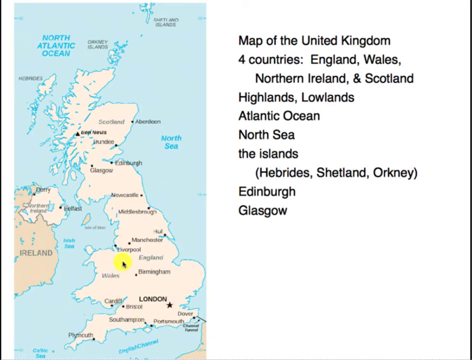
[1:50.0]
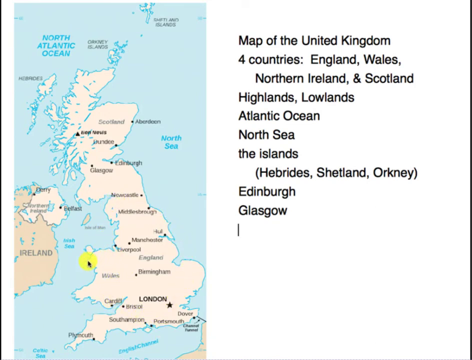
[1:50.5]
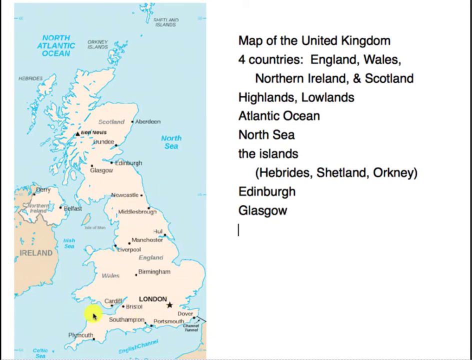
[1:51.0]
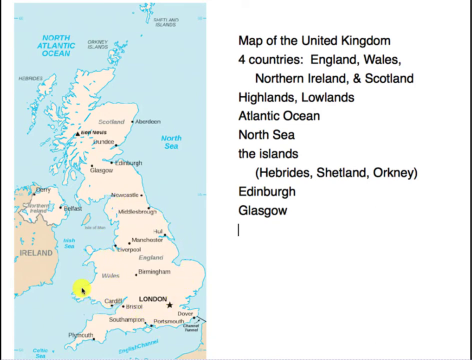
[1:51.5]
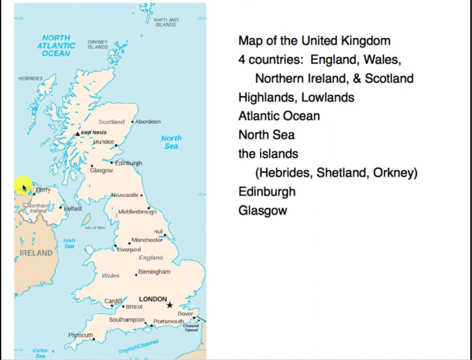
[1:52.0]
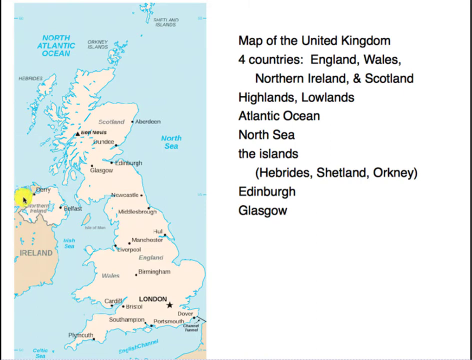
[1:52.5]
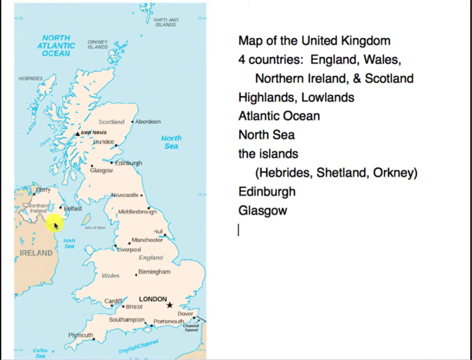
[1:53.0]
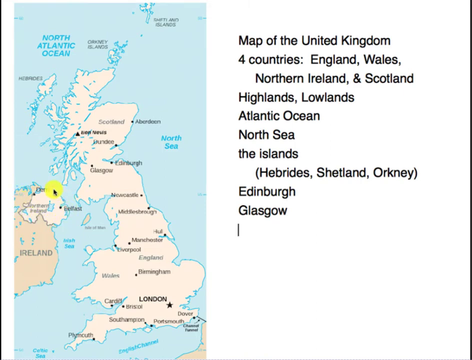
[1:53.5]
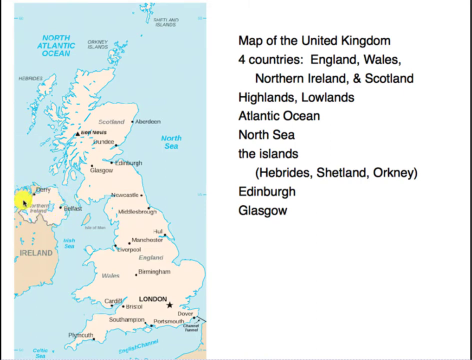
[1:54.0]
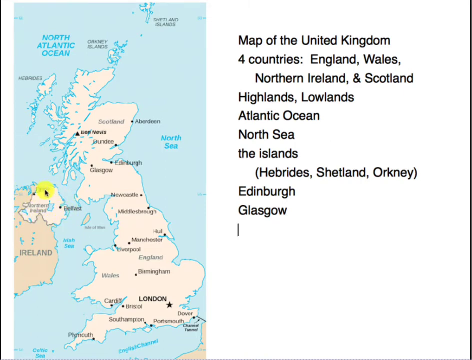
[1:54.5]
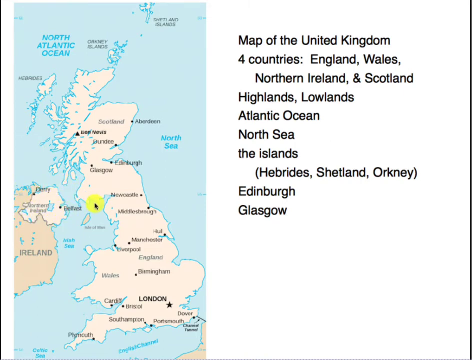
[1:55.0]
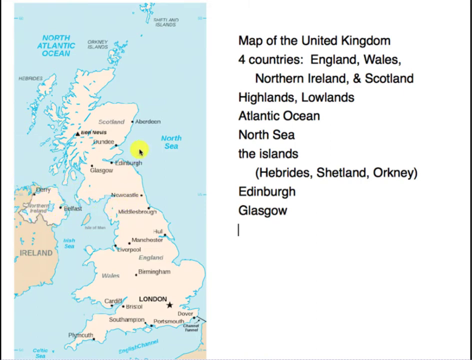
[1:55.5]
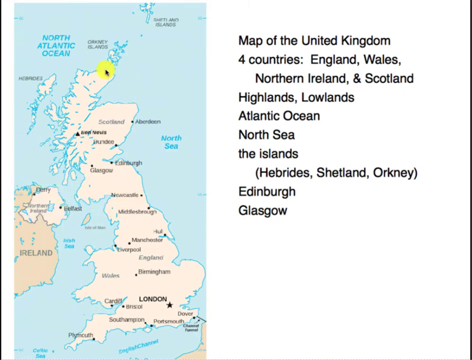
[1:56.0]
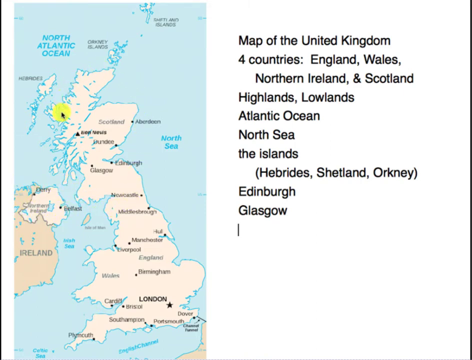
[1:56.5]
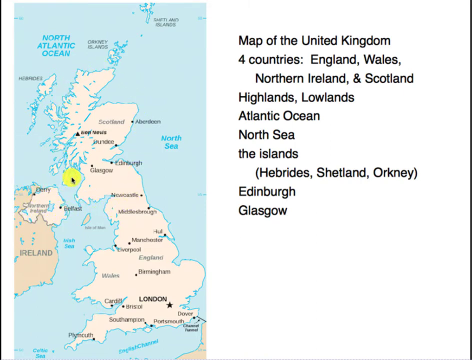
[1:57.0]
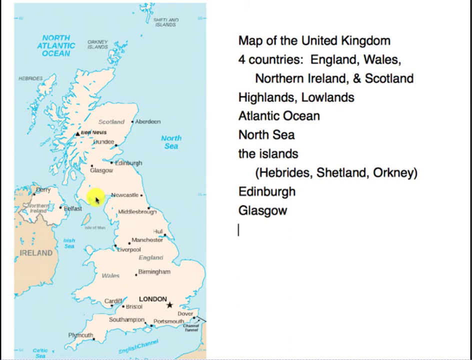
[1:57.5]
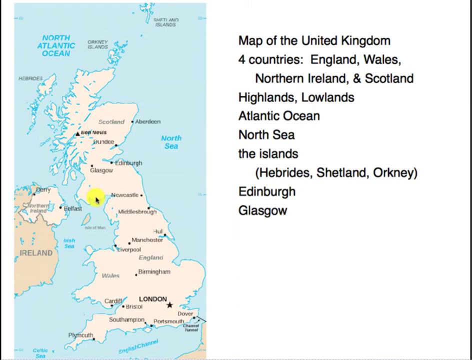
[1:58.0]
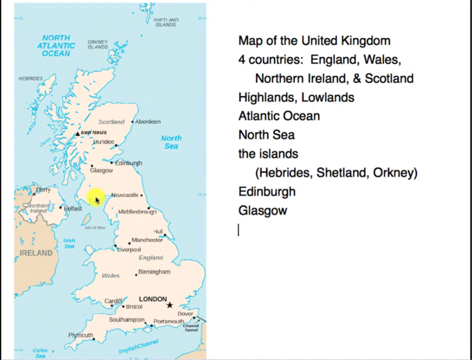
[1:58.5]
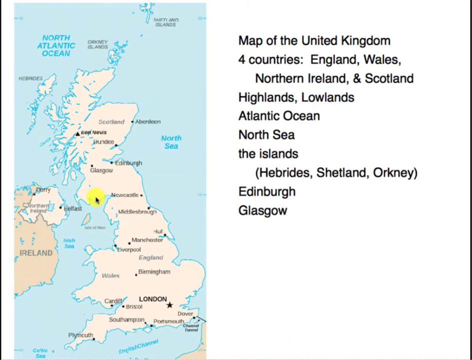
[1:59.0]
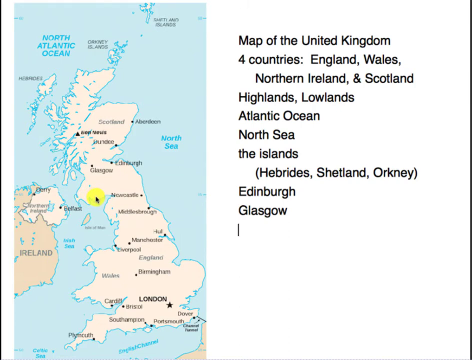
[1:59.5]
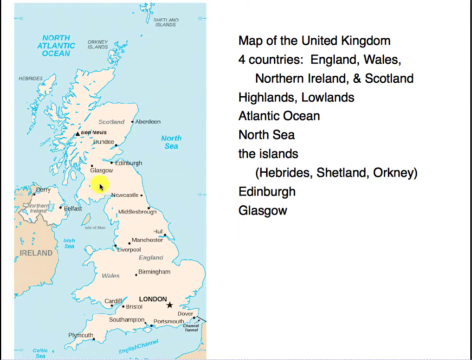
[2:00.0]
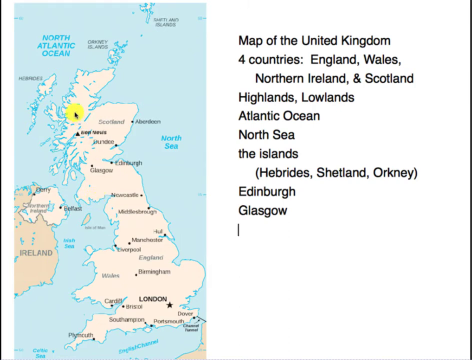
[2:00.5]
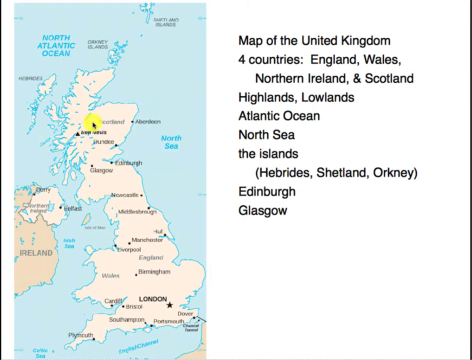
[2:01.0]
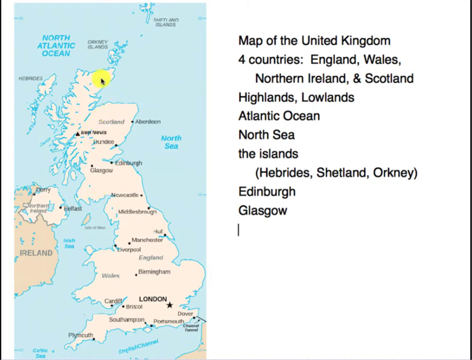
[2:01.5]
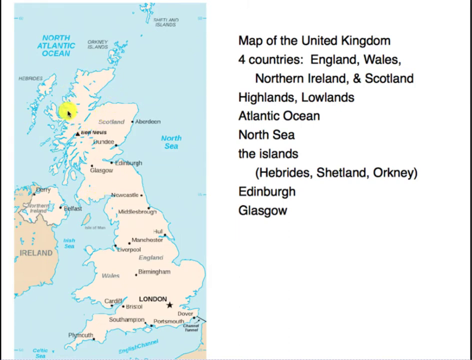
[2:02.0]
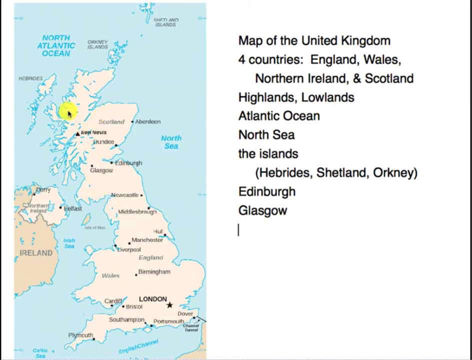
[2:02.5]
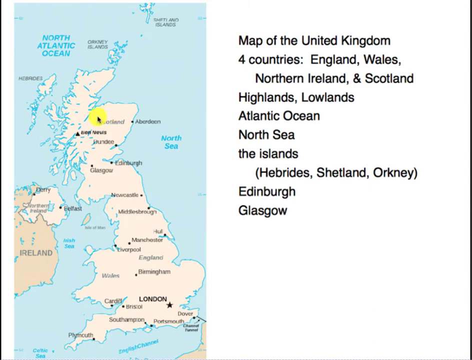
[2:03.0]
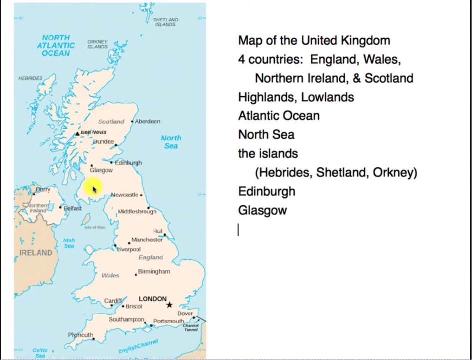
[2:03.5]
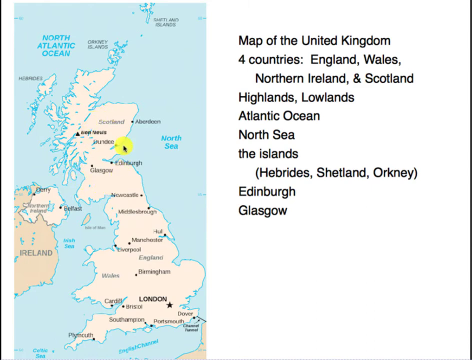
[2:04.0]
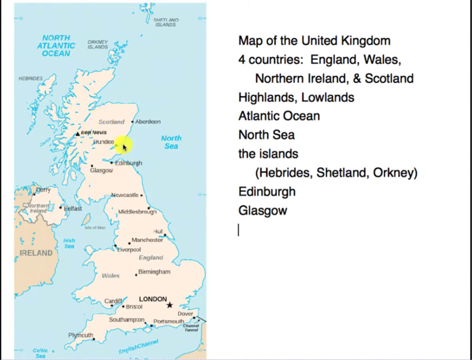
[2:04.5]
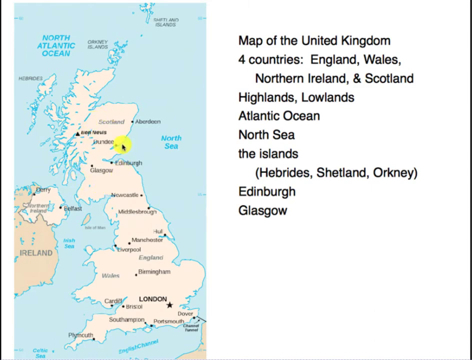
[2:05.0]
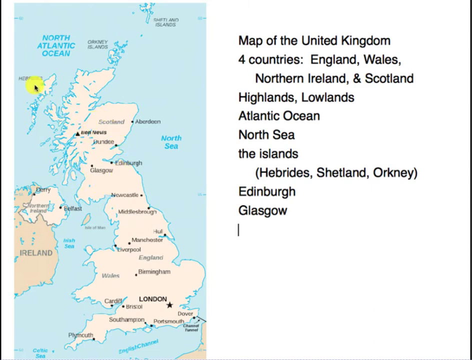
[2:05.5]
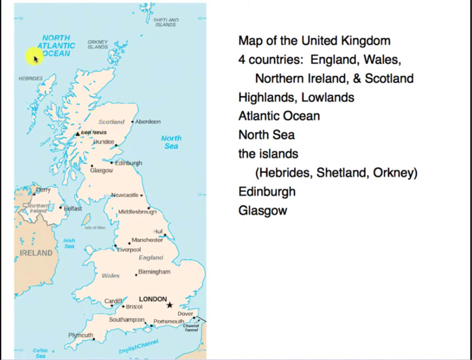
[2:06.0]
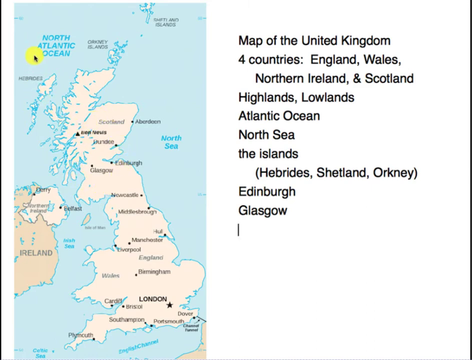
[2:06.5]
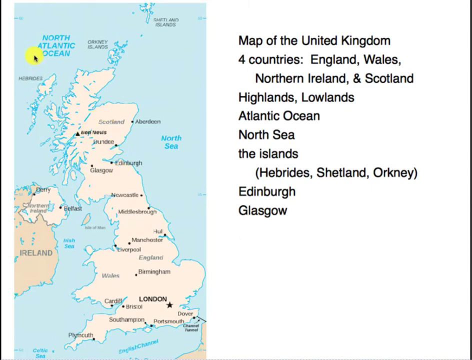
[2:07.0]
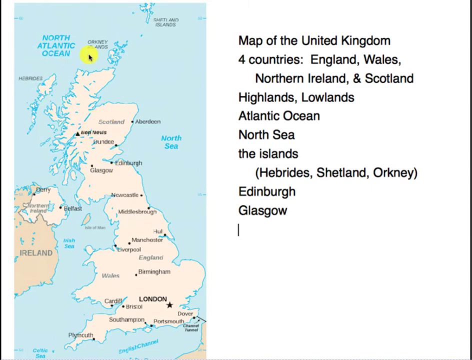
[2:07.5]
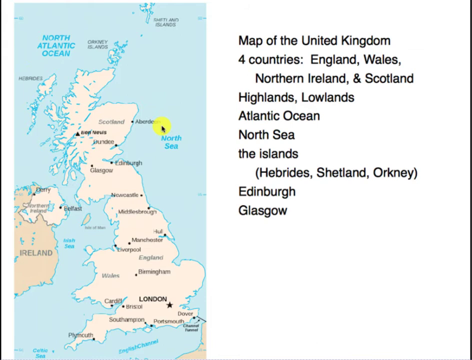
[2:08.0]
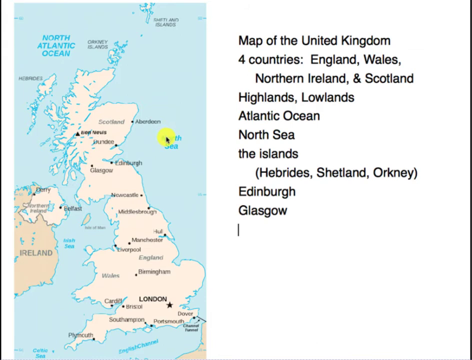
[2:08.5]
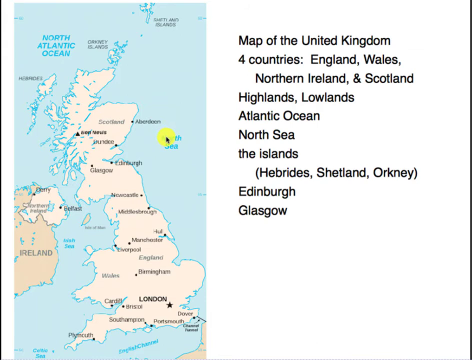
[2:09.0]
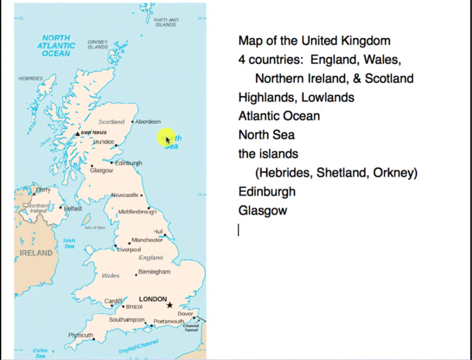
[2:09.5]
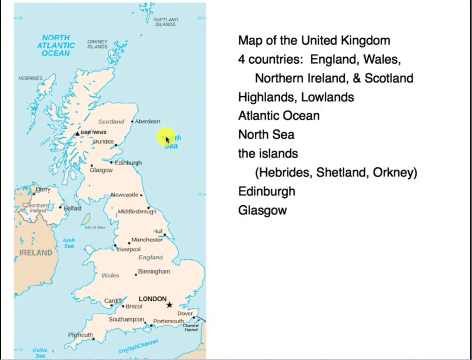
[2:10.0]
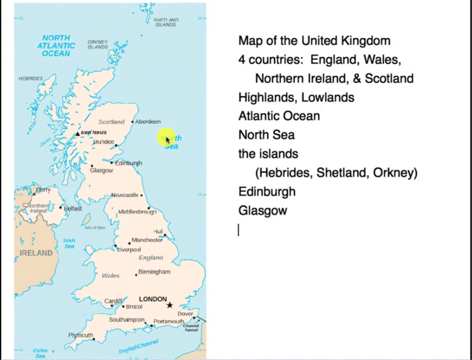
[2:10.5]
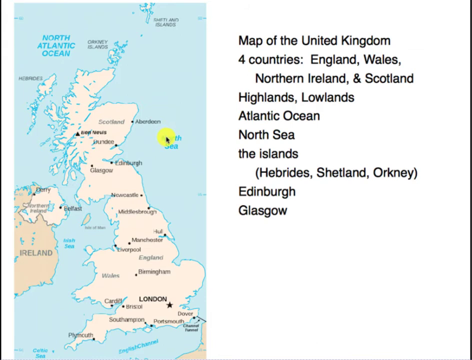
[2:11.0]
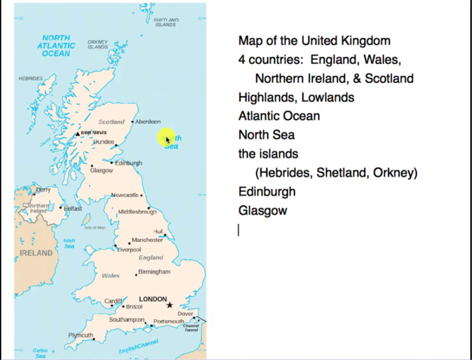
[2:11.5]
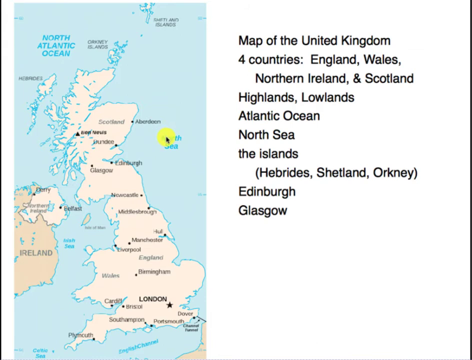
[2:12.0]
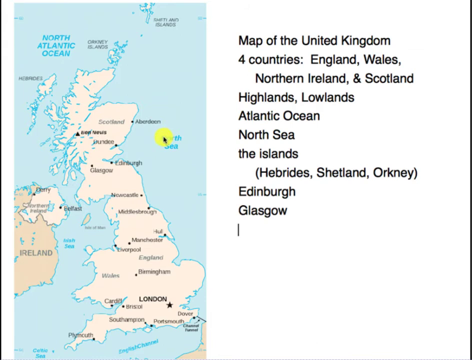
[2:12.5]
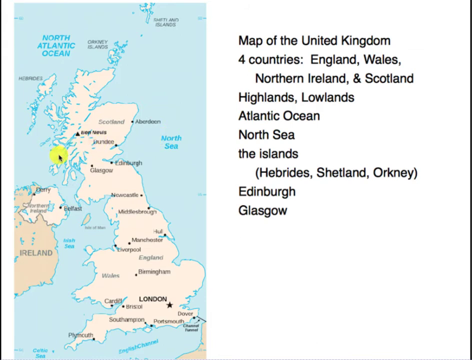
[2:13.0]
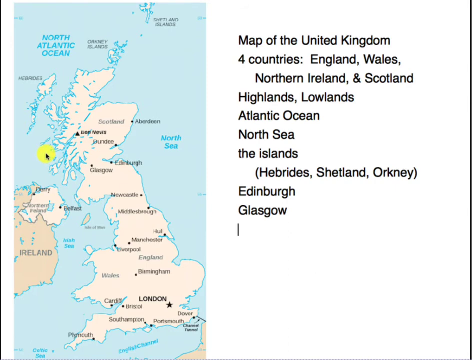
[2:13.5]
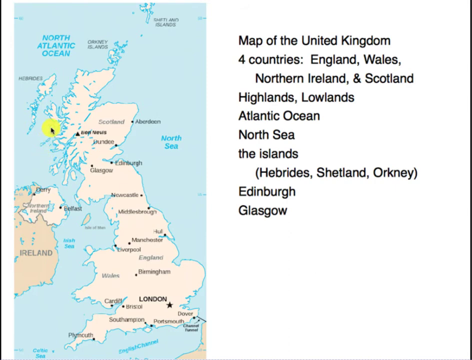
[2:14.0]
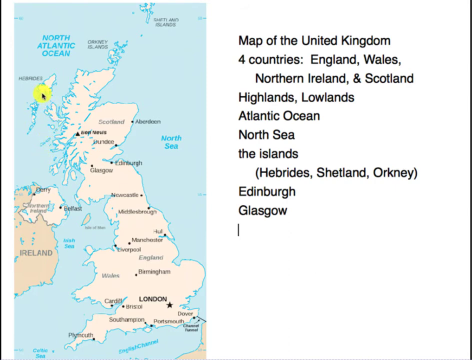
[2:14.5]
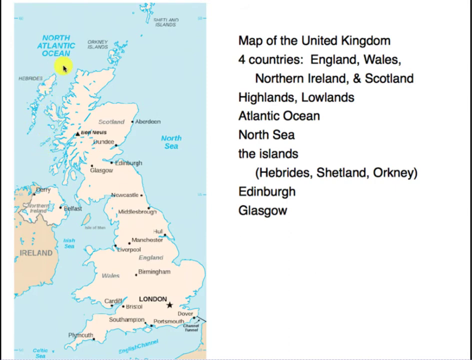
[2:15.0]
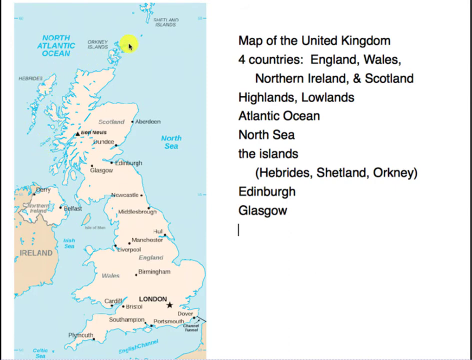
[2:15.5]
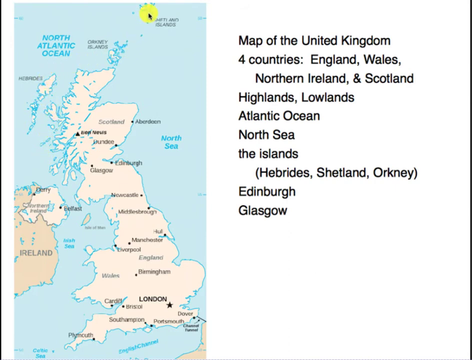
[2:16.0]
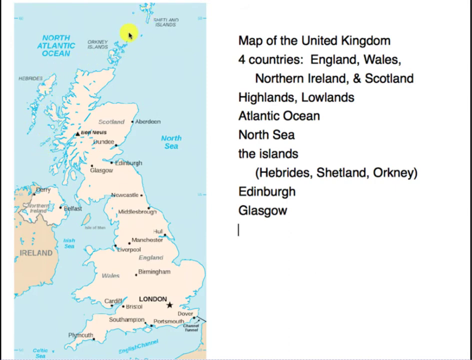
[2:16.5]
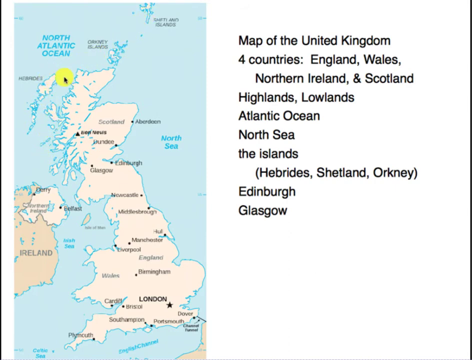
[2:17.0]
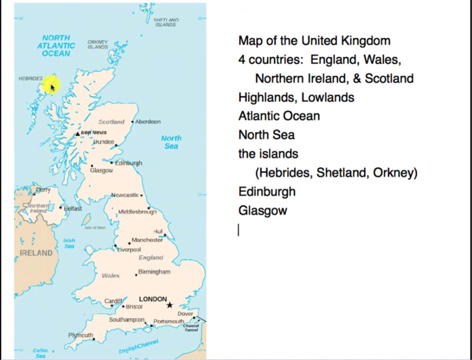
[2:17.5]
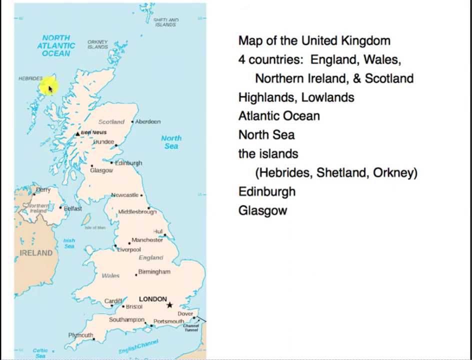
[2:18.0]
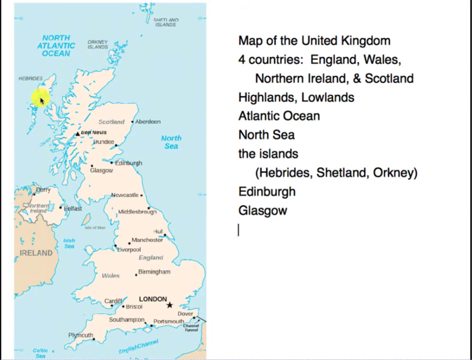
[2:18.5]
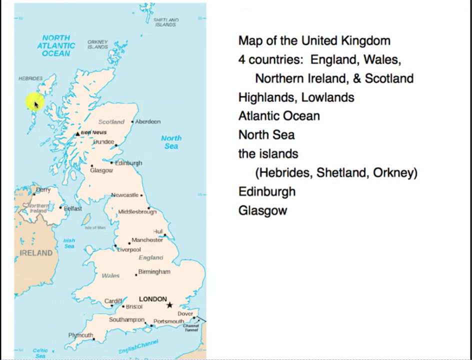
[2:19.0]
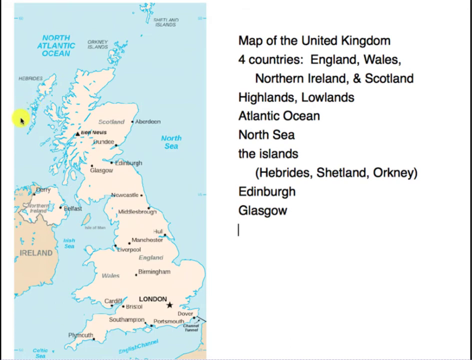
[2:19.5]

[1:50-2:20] A map of the United Kingdom shows the four countries it includes: England, Wales, Northern Ireland and Scotland. It shows the Highlands and the Lowlands, the North Atlantic Ocean in the top left corner, the North Sea on the right side of the map, the islands of the Hebrides, Shetland and Orkney, and Edinburgh and Glasgow in Scotland. A yellow circle with a cursor in it is around Liverpool on the map, and as the video progresses the yellow cursor moves around to circle various parts of the United Kingdom, highlighting landmarks such as oceans, islands and major cities. The text on screen reads, "Map of the United Kingdom, four countries, England, Wales, Northern Ireland, and Scotland, Highlands, Lowlands, Atlantic Ocean, North Sea, the Islands, Hebrides, Shetland, Orkney, Edinburgh, and Glasgow."